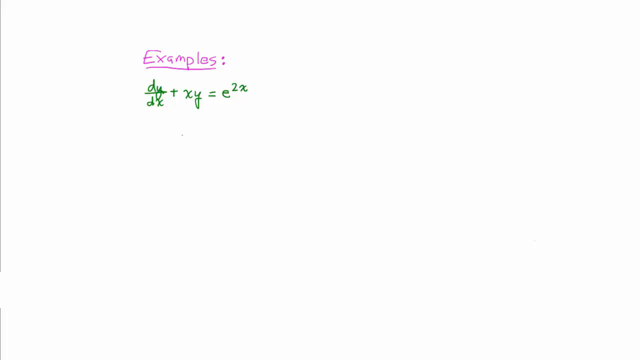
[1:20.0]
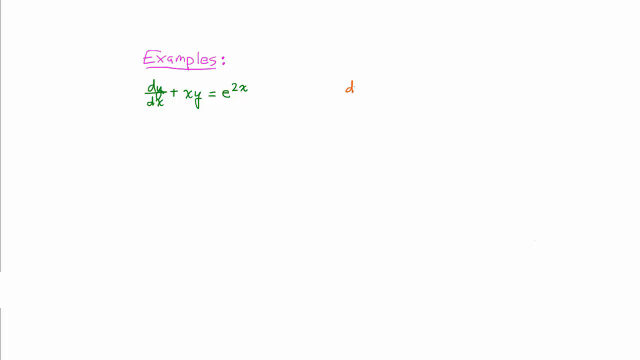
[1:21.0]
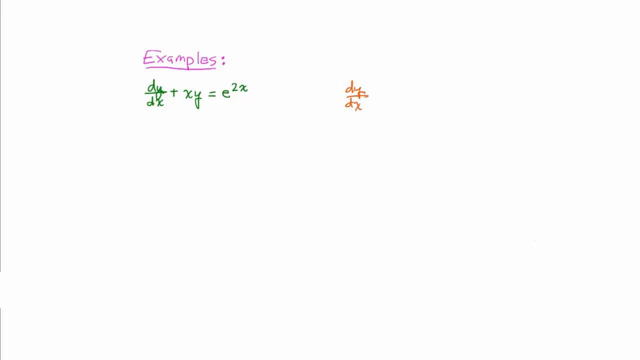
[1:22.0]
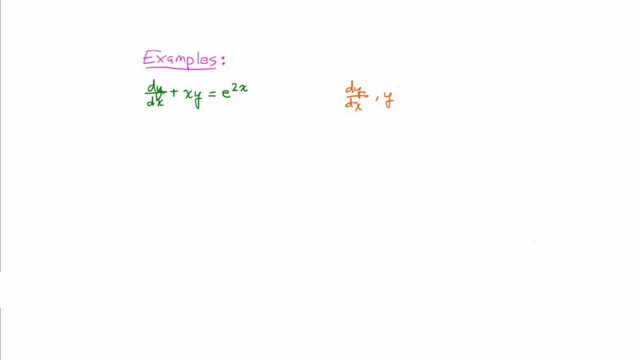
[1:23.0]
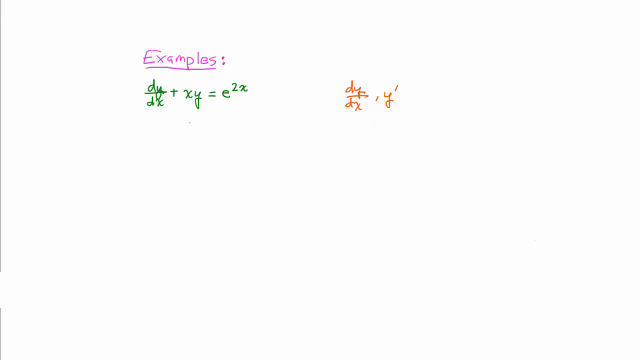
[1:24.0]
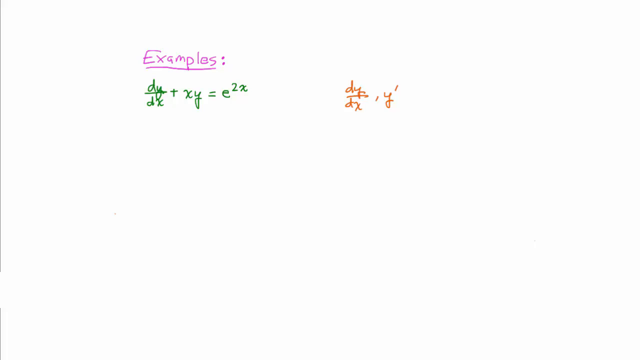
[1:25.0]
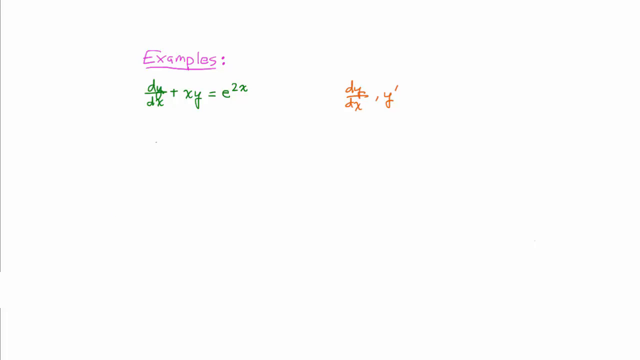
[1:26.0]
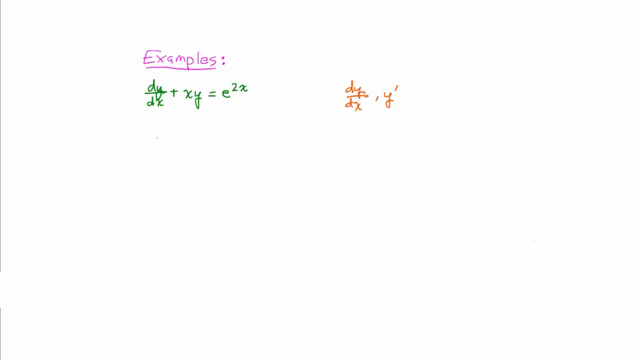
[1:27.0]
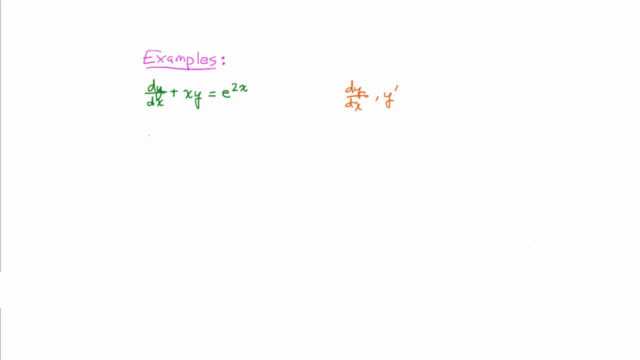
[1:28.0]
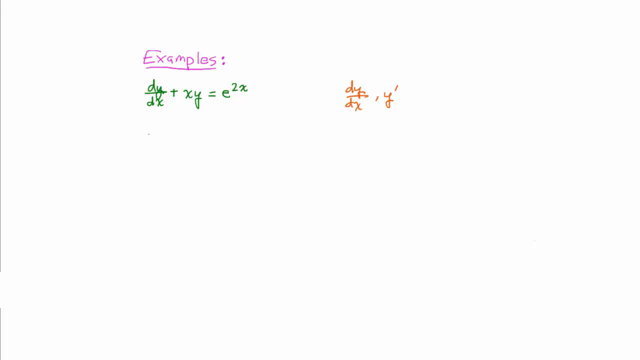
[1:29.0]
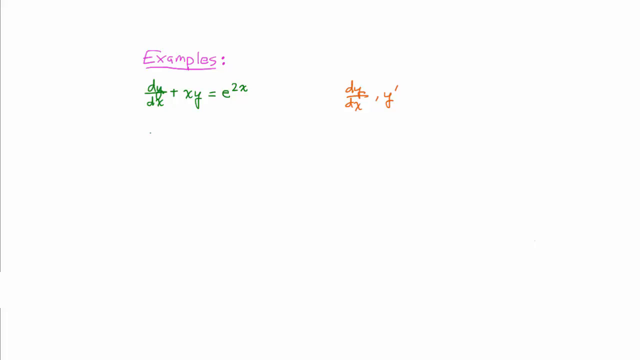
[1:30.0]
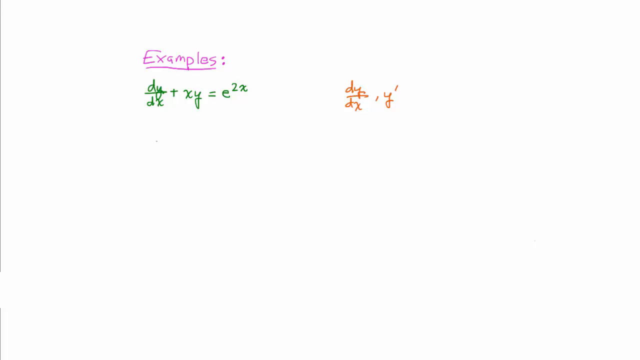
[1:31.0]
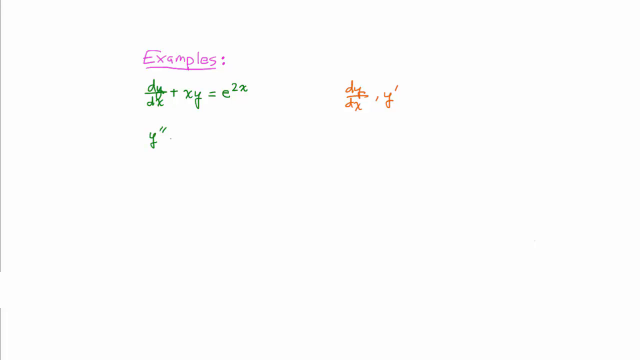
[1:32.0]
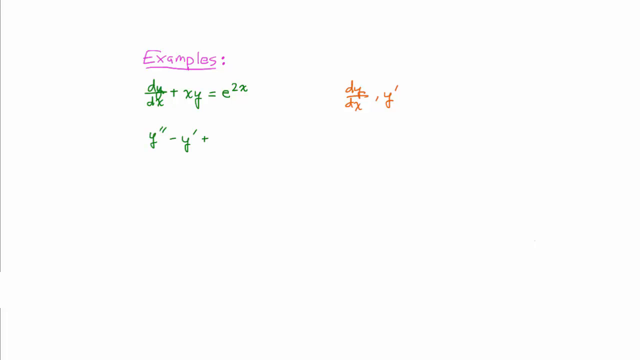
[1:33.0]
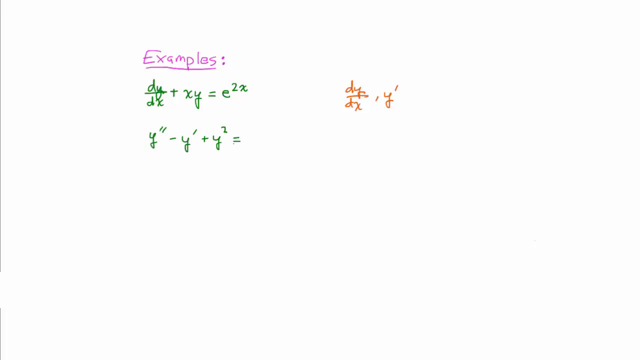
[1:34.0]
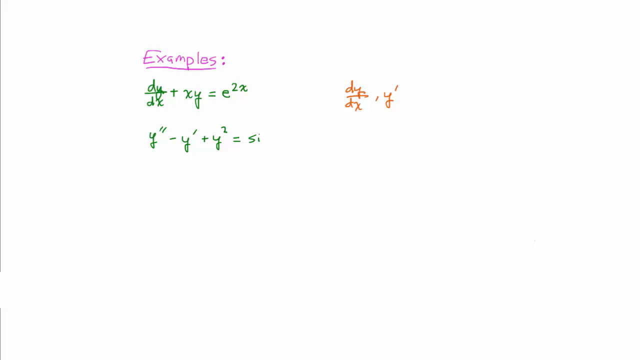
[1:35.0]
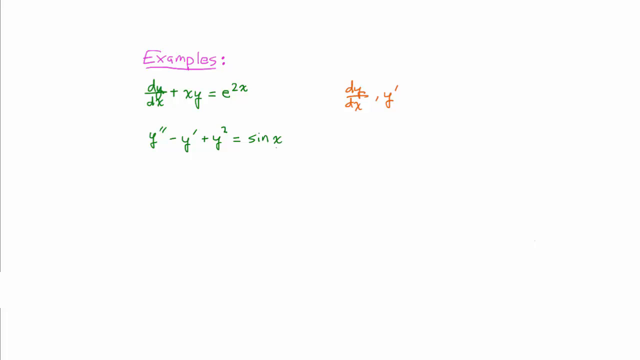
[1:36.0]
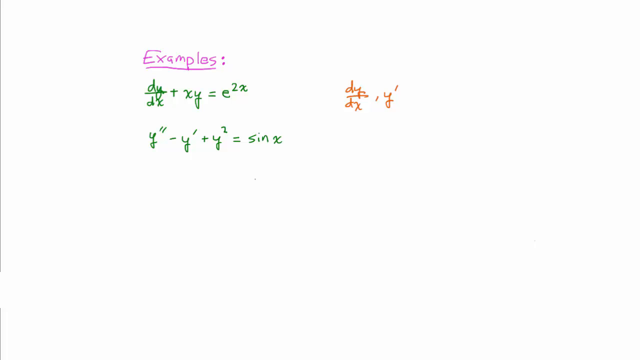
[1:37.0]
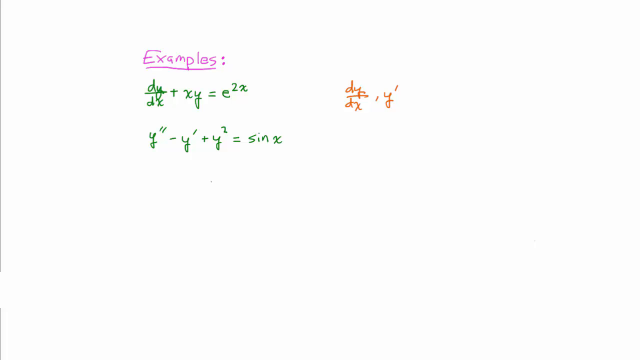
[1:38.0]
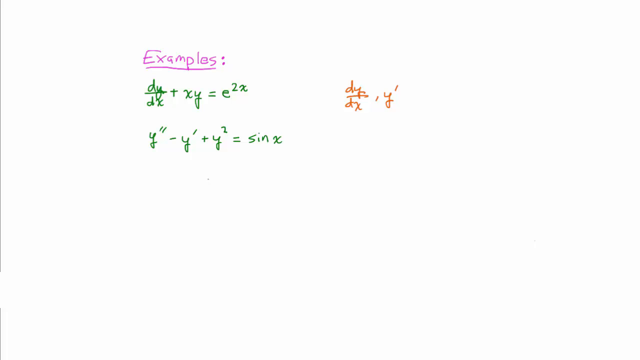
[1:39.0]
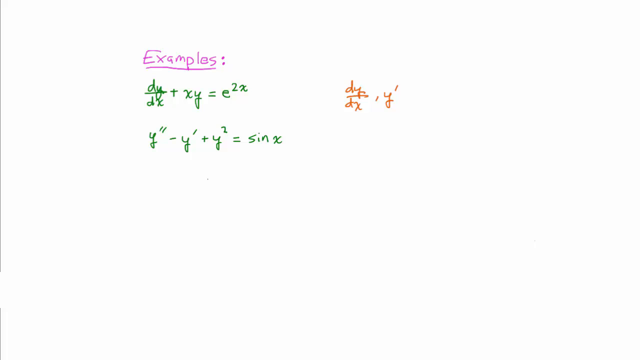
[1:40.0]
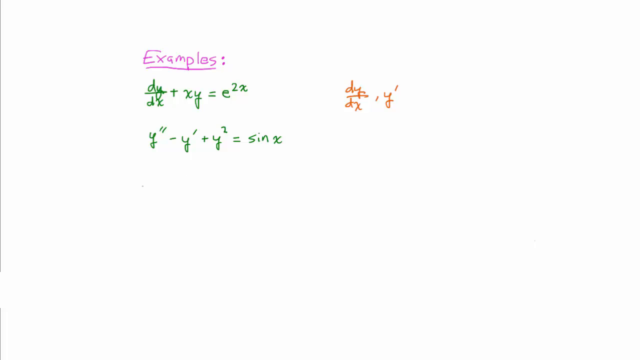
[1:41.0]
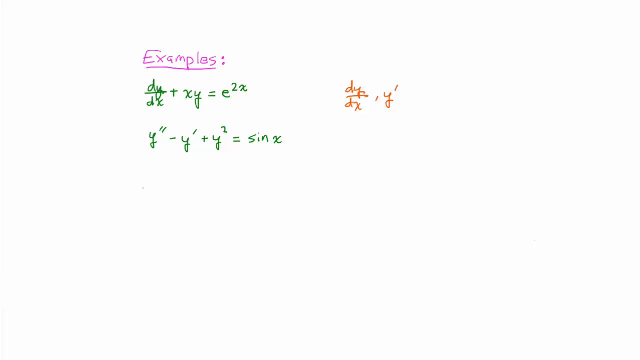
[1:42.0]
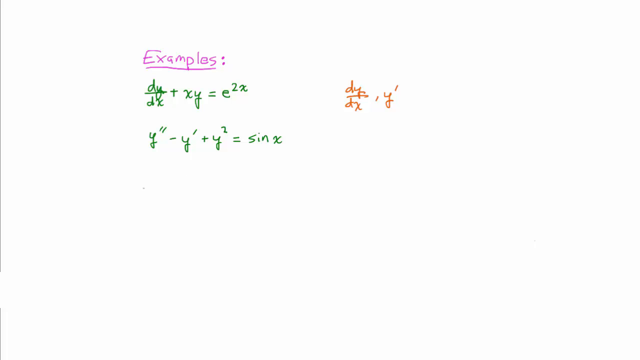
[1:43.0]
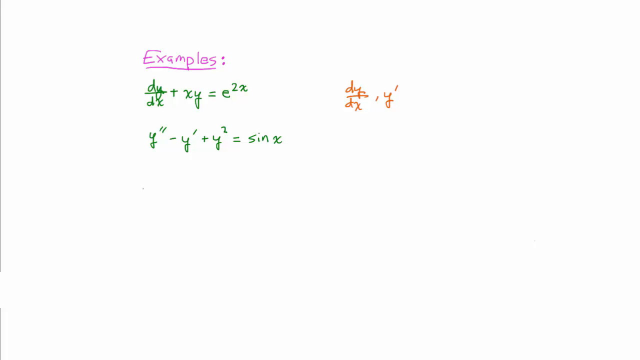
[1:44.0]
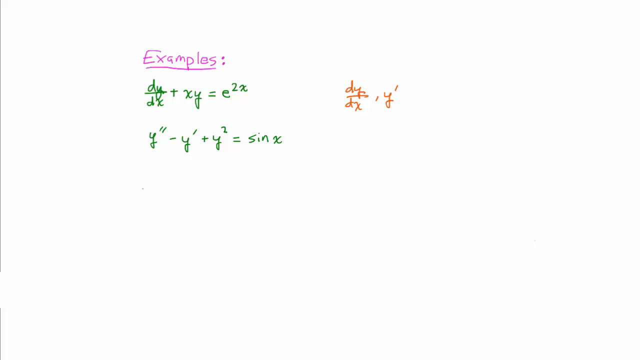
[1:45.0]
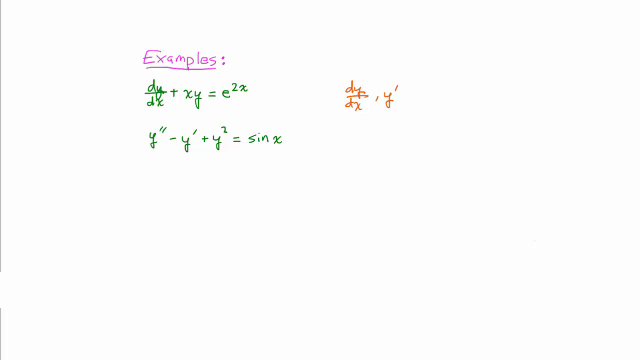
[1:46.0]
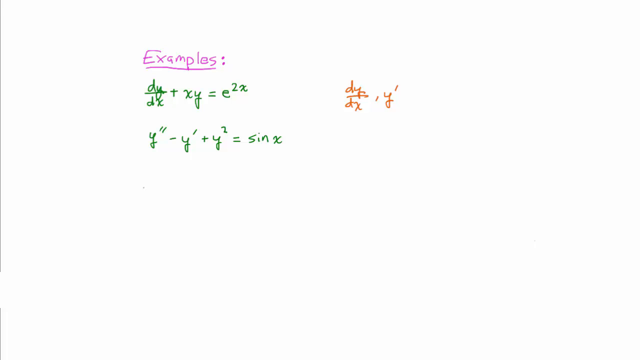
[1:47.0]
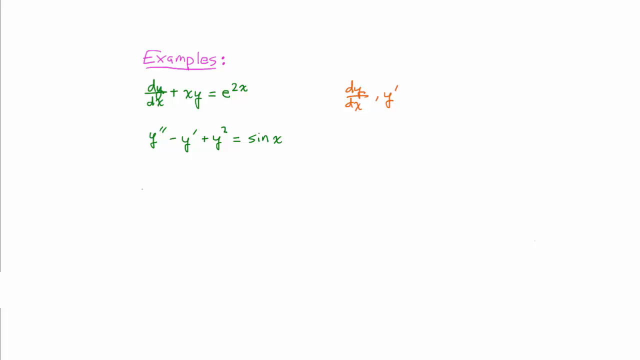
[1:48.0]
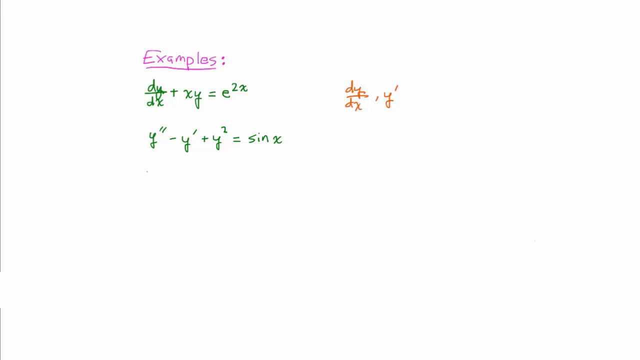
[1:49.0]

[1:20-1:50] On the white background, about an inch from the top and about two and a half inches from the left side, "examples" is written in regular print in purple and underlined. Below it, lined up with "examples" after a small space, green lettering reads "dy over dx plus xy equals e to the second power," with an x beside the two. Below that, lined up with everything above, is a y with two little lines angled up to the right above it, minus y with one little line angled up to the right above it, plus y to the second power, equals sin x. About an inch to the side, somewhat right of center and lined up with the top green equation, red lettering reads dy over dx minus y, with a slanted mark over the top of the y on its right side.